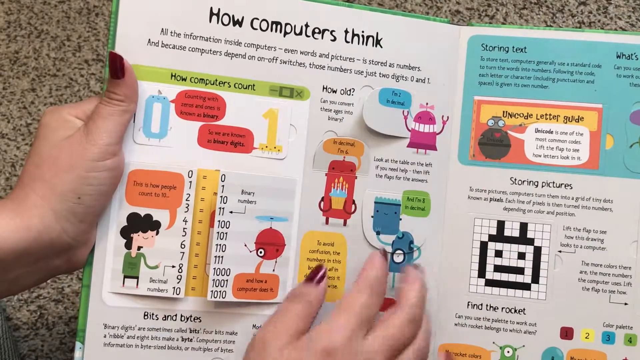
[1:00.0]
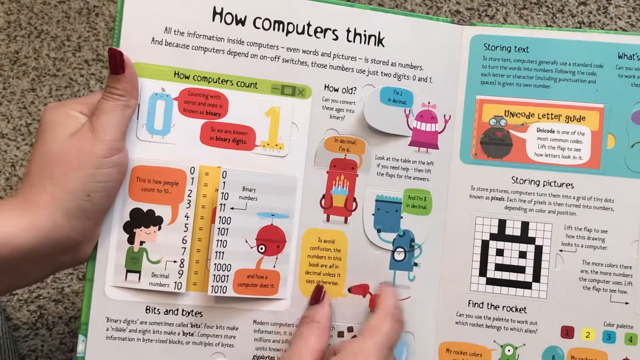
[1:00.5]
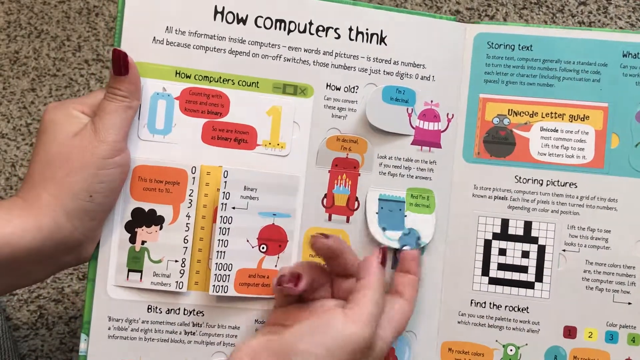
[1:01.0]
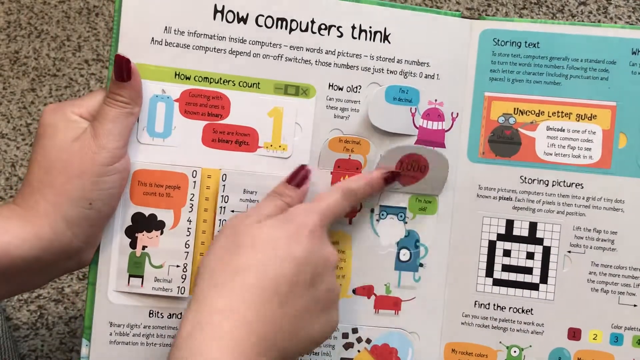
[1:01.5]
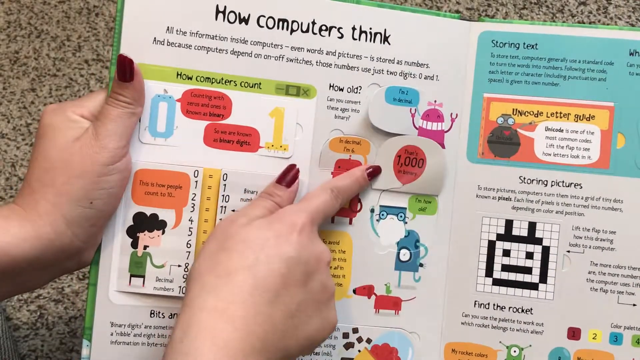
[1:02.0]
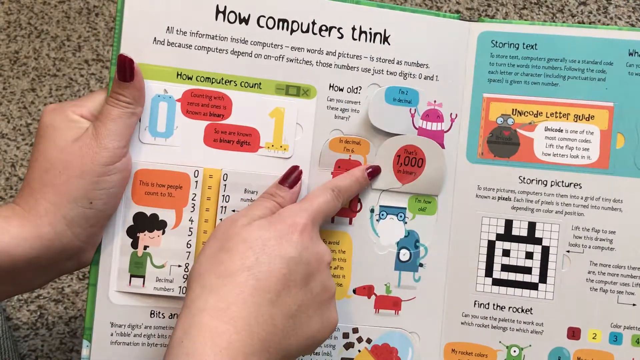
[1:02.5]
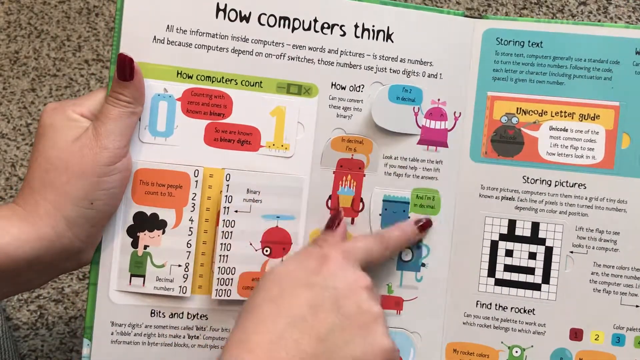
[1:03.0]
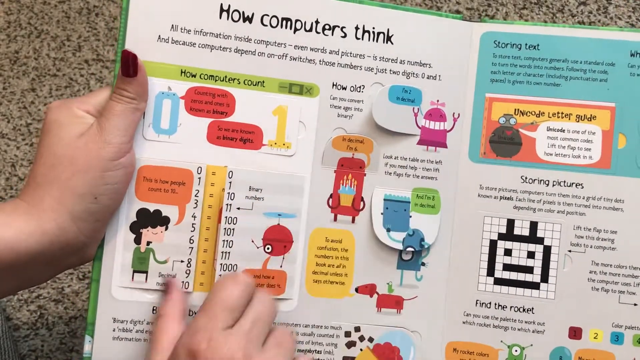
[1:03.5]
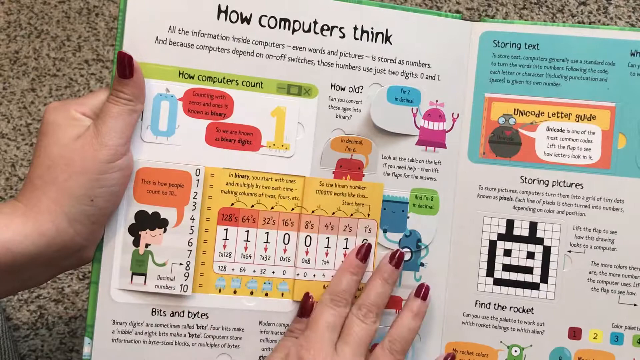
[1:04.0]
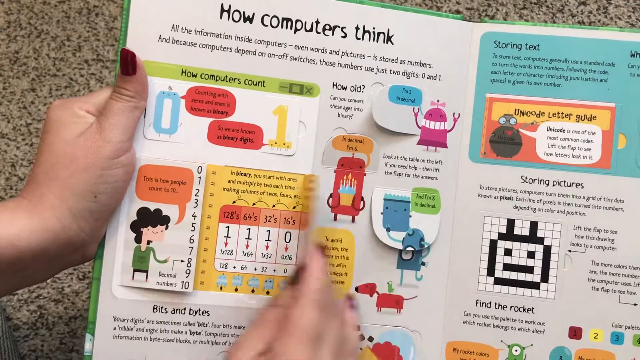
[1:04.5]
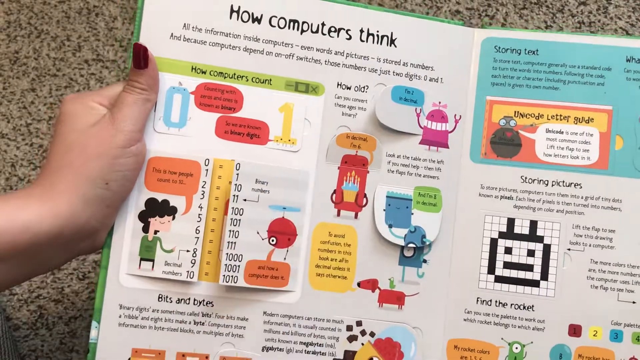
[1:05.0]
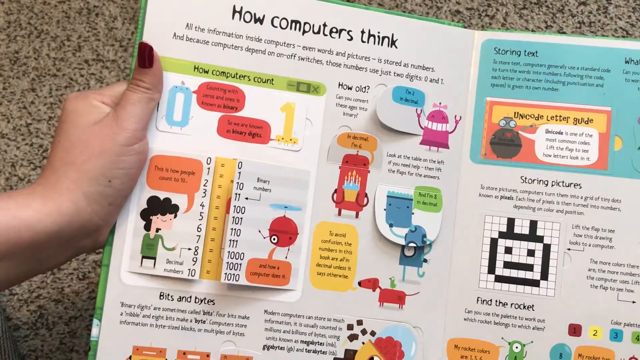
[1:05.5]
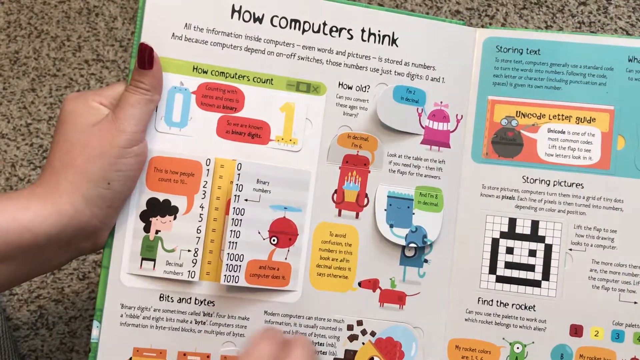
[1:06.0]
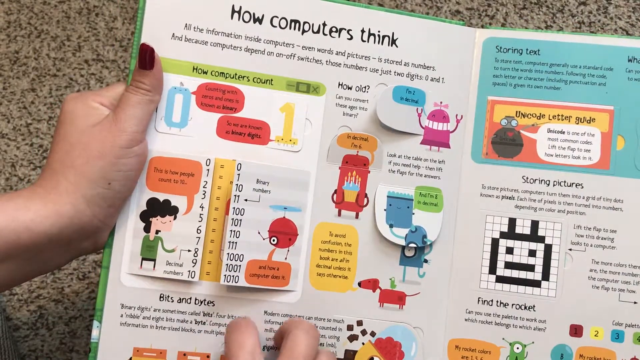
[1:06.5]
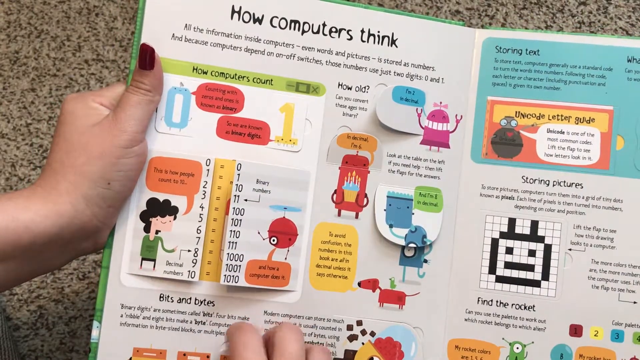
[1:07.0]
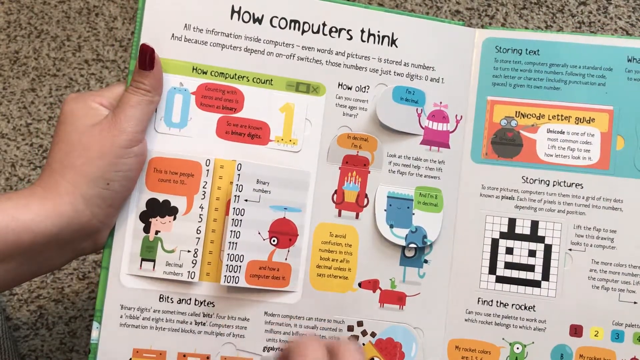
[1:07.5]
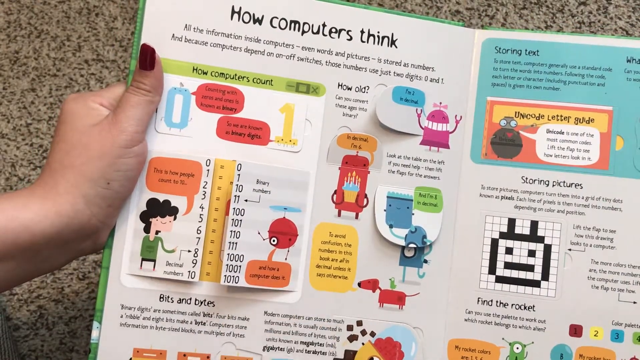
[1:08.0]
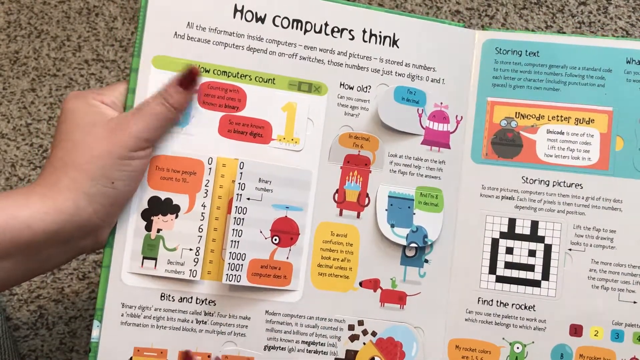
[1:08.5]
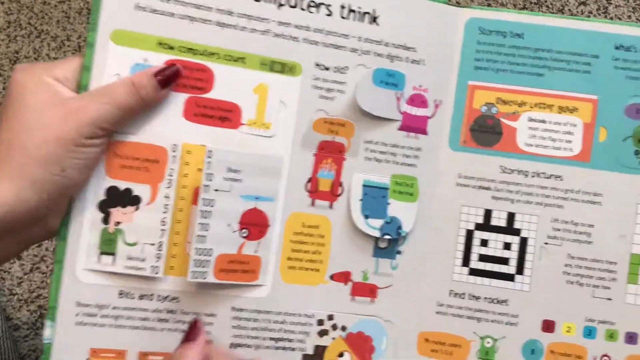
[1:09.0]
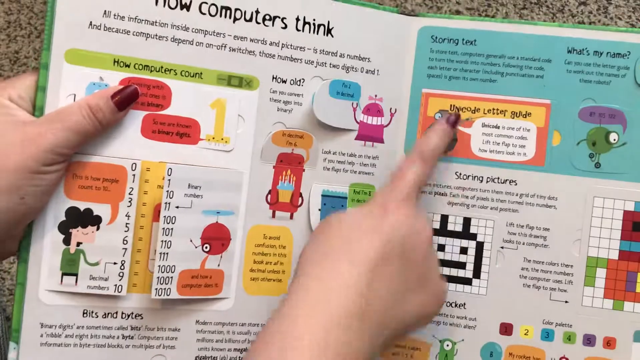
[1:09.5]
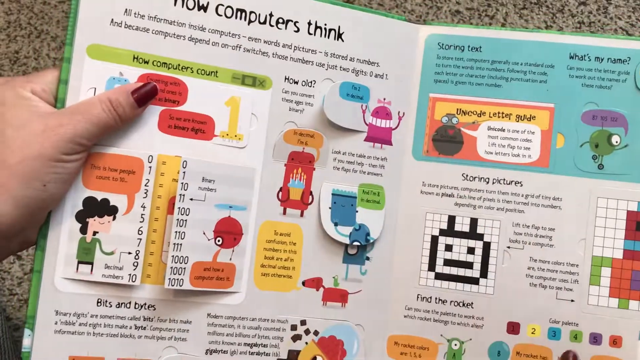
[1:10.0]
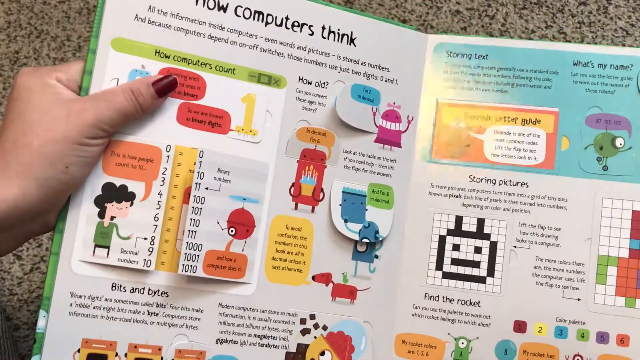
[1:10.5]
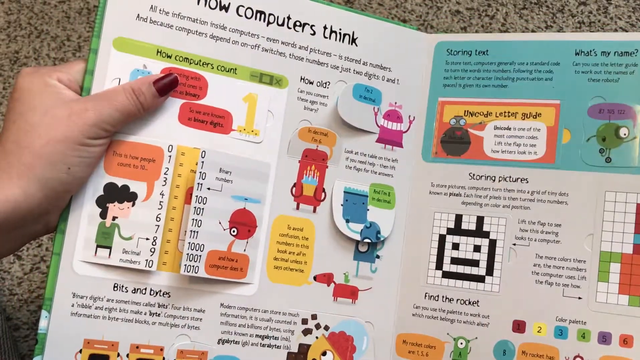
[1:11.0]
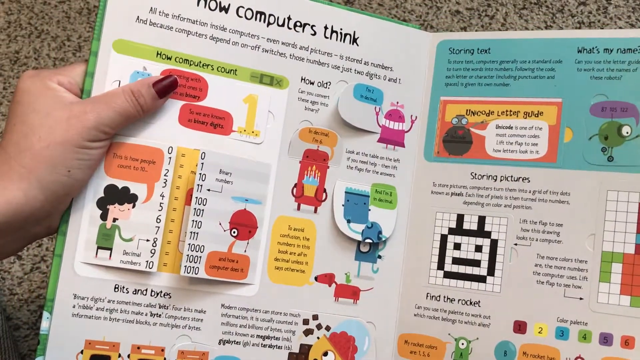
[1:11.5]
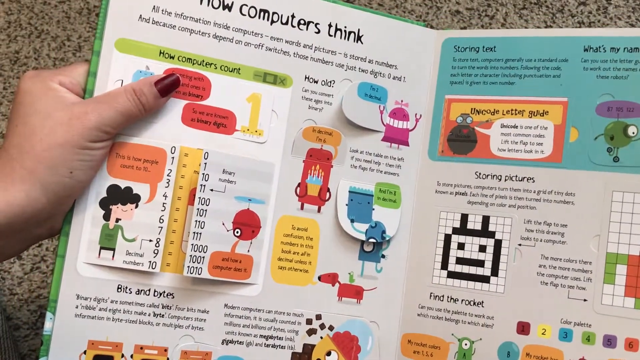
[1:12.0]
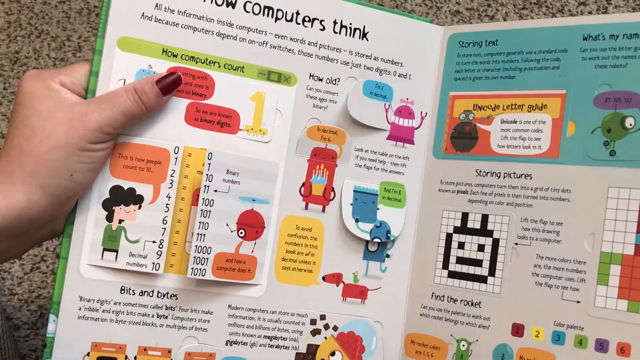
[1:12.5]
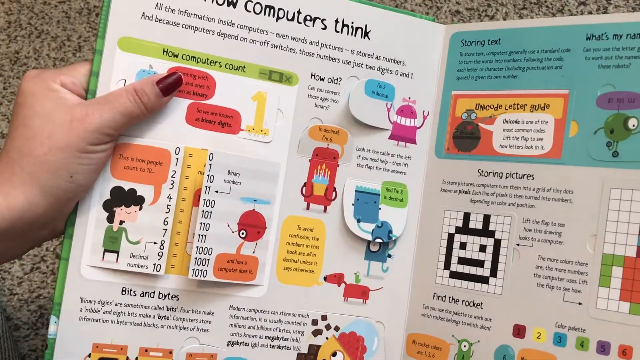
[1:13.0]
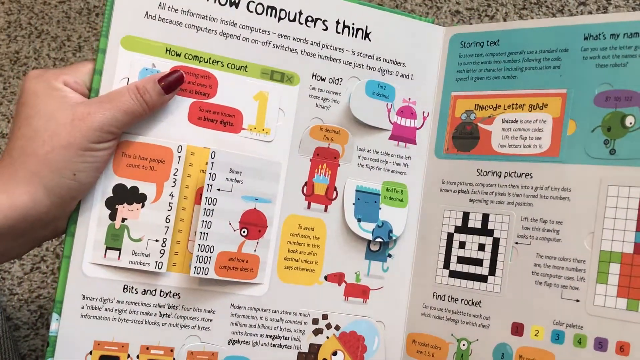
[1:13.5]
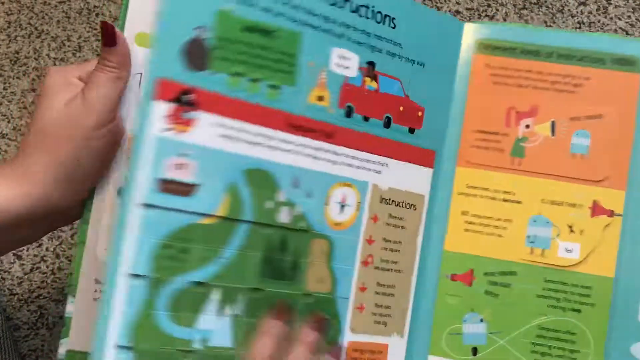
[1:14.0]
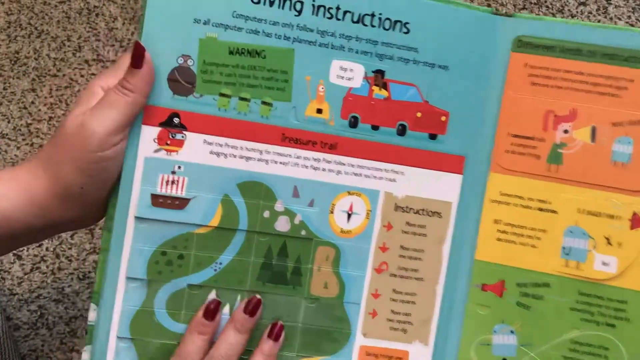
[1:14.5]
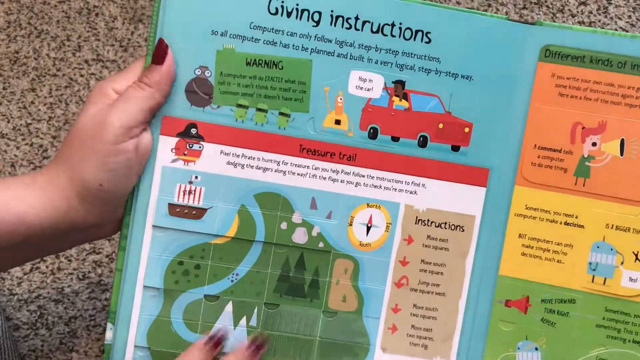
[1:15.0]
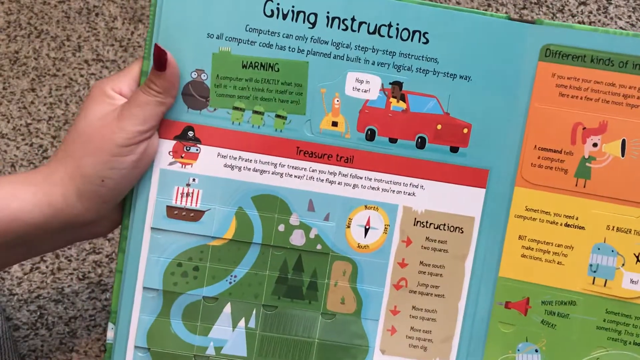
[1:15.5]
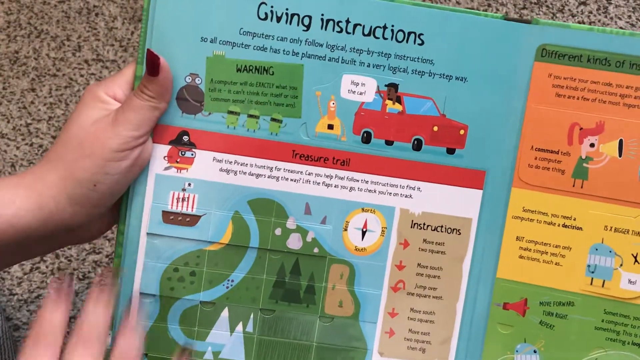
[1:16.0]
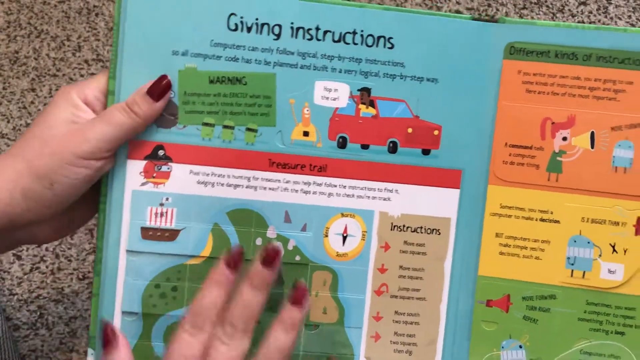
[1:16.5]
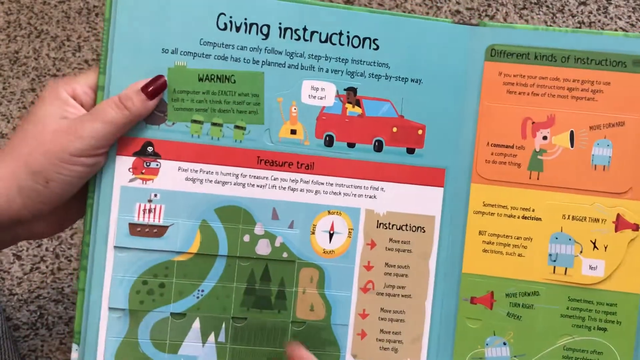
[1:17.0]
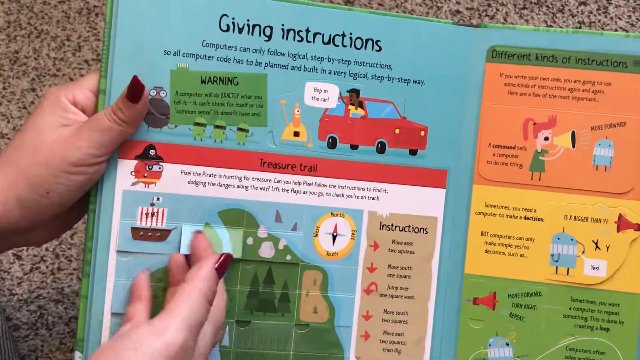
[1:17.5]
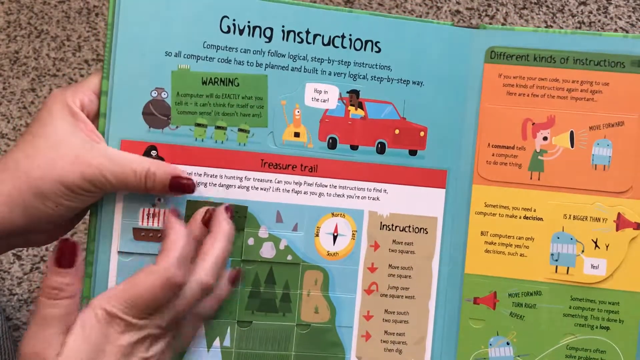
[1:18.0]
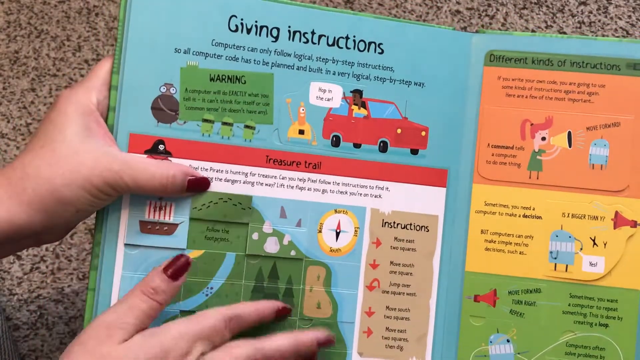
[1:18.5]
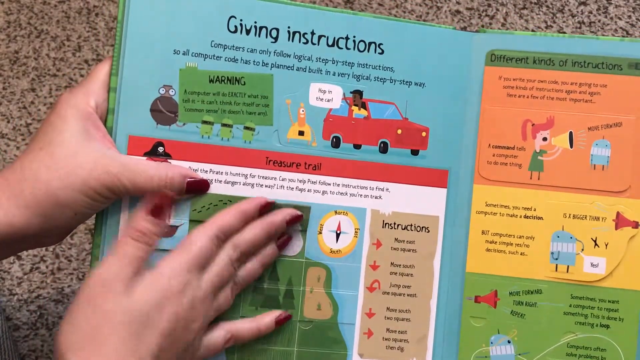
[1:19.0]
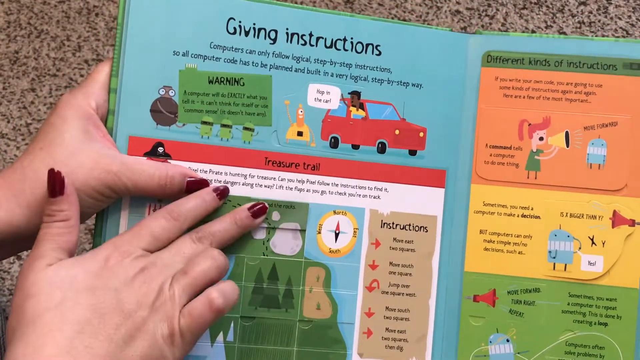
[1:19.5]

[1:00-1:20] The woman flips a blue robot, and underneath is a talk bubble with a hundred on it. She flips the same chart again to reveal a table inside. At the bottom of the page she tries to flip one illustration but decides not to. On the next page she just points to a few illustrations, including one that apparently reads "Unicode letter guide", without flipping it. She then turns to a page titled "Giving instructions". This page is blue and has a large chart with a red header, "Treasure trail", containing a map with a creek, pine trees, a sandy area, a compass and a boat. Each square on the map is flippable, and she flips a few squares, revealing something underneath.